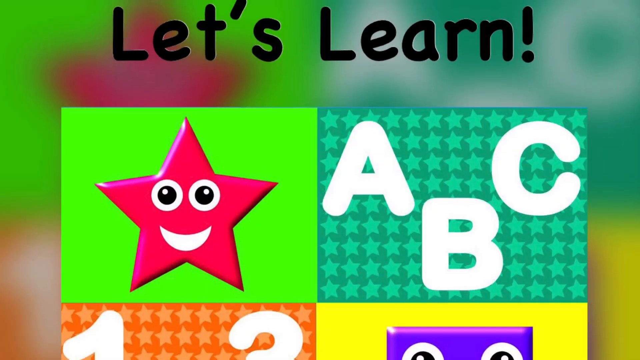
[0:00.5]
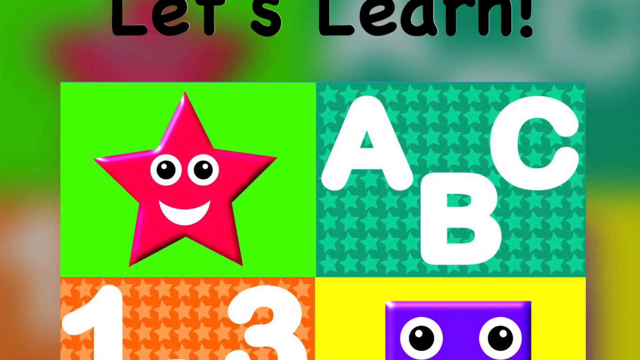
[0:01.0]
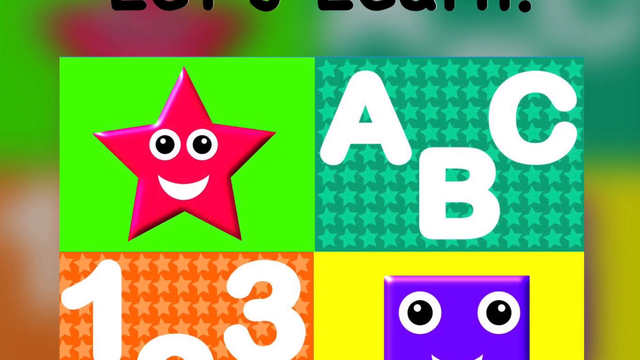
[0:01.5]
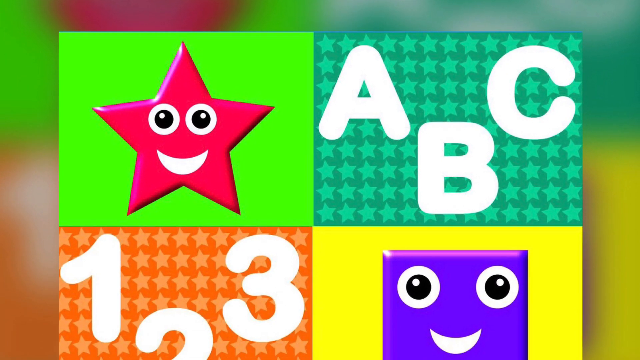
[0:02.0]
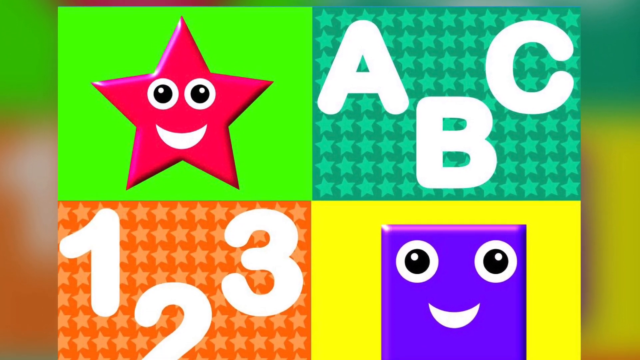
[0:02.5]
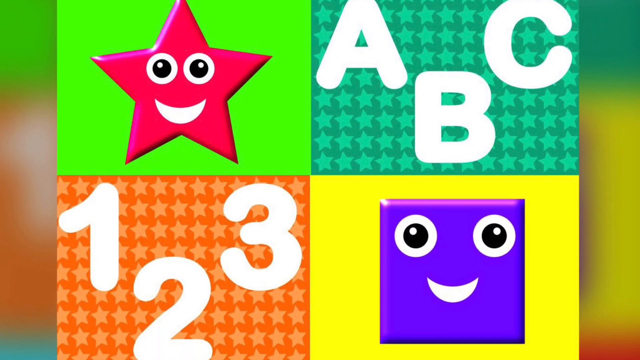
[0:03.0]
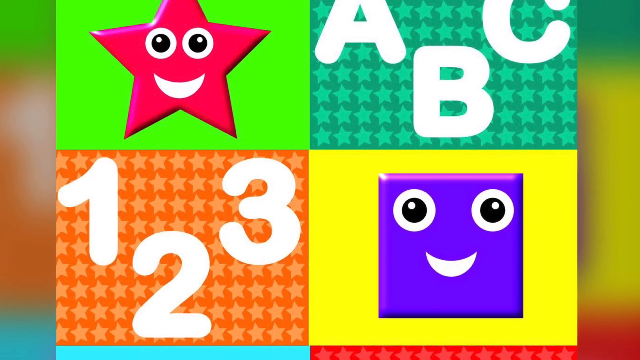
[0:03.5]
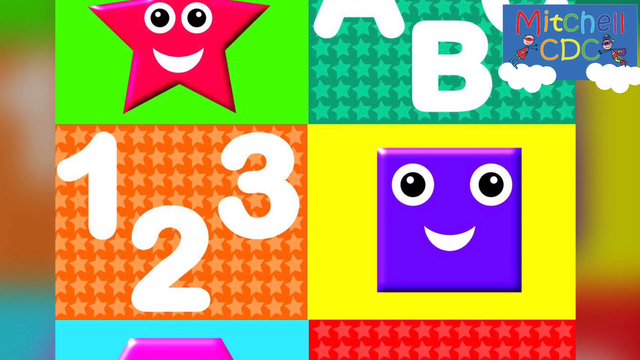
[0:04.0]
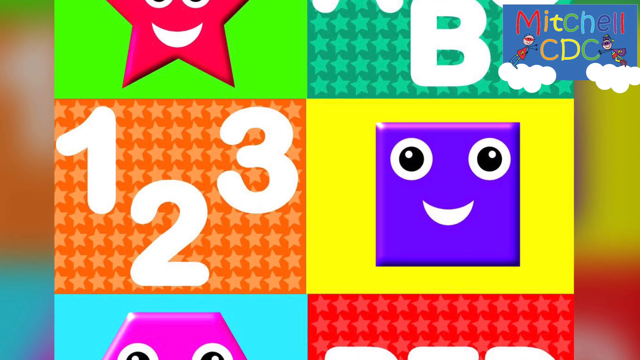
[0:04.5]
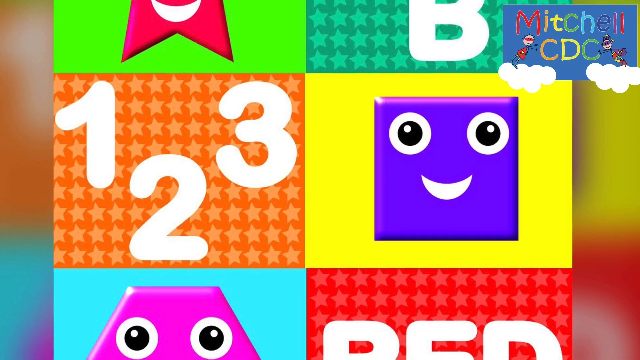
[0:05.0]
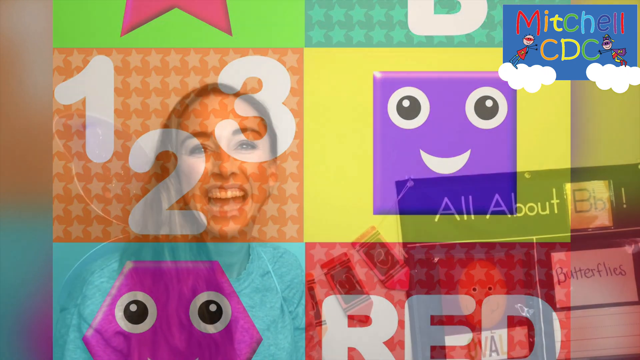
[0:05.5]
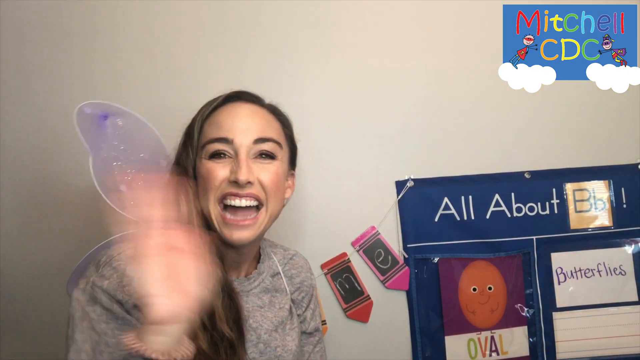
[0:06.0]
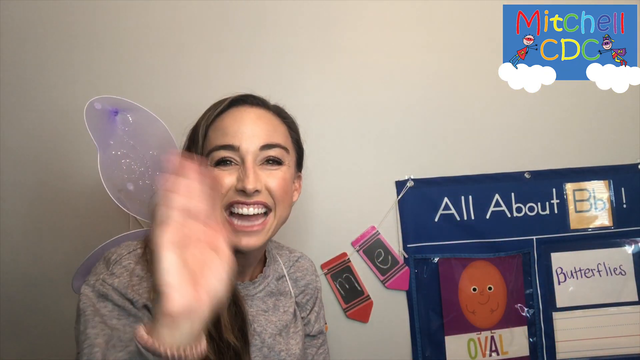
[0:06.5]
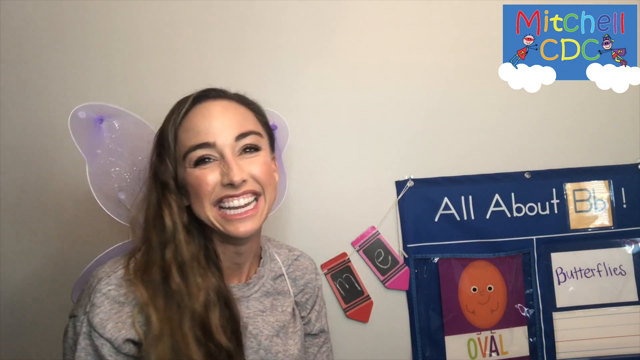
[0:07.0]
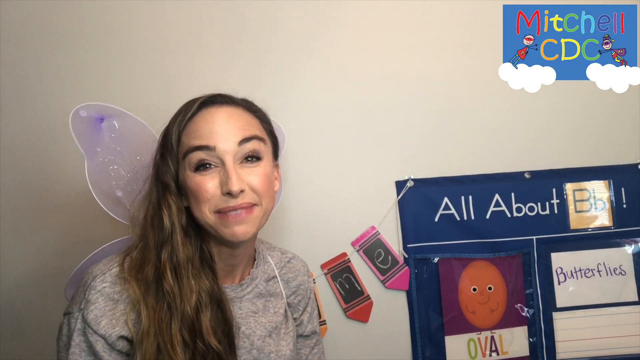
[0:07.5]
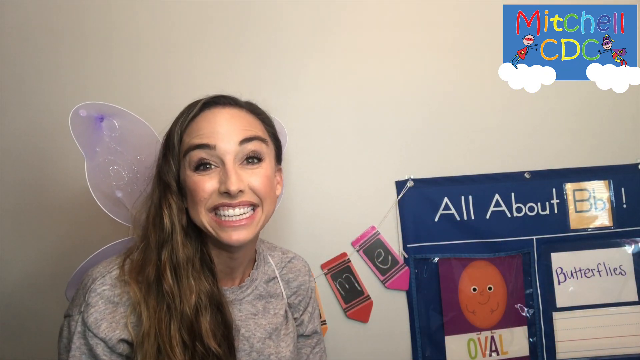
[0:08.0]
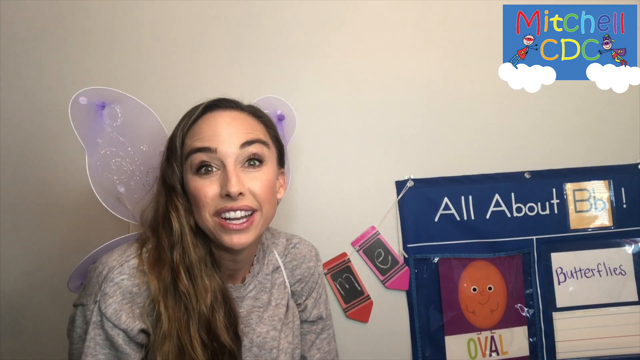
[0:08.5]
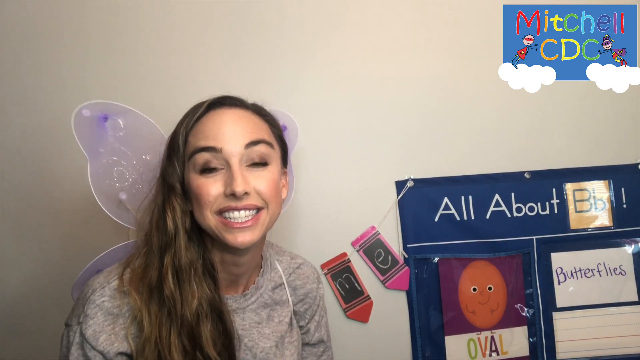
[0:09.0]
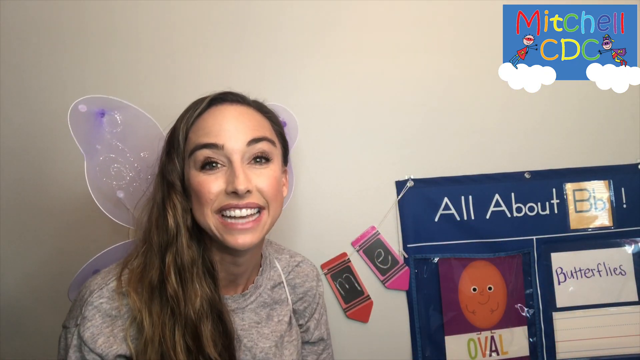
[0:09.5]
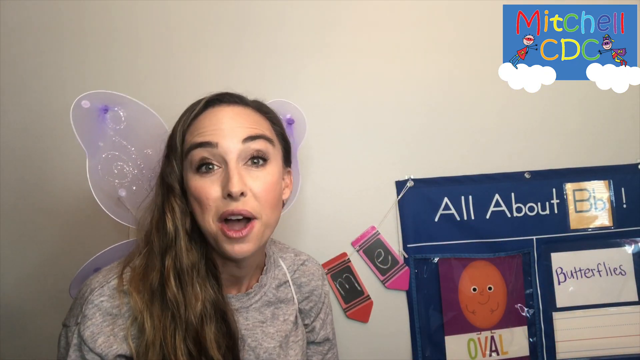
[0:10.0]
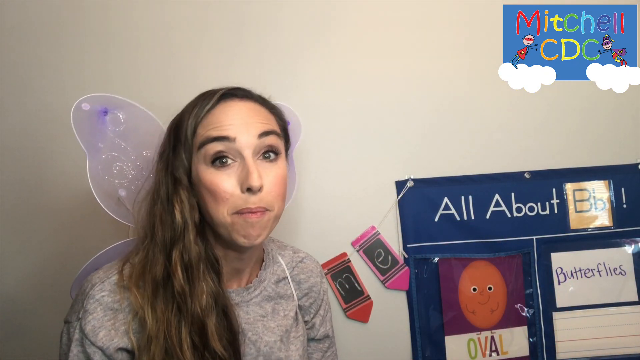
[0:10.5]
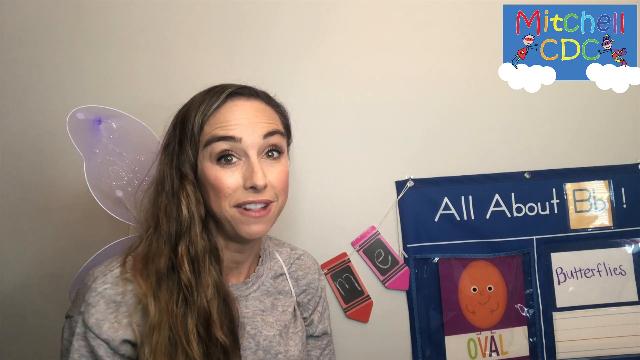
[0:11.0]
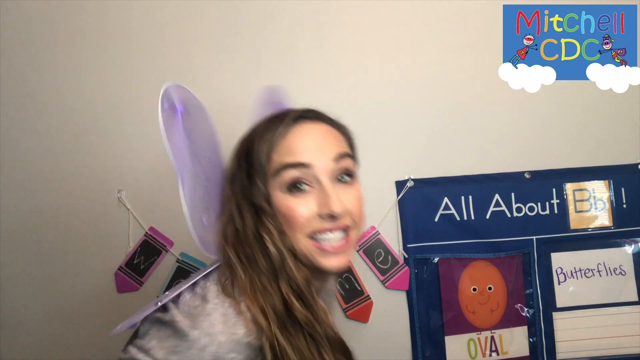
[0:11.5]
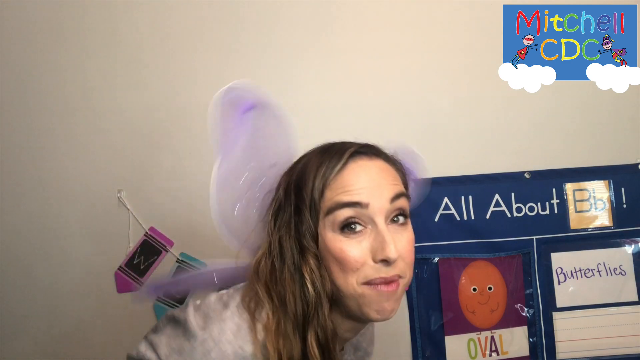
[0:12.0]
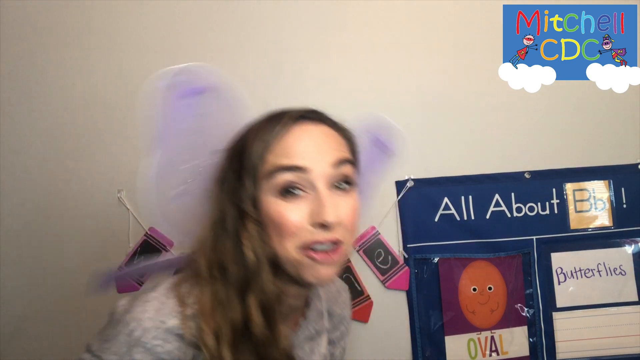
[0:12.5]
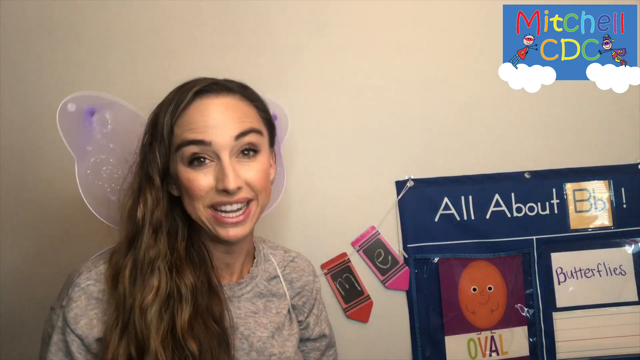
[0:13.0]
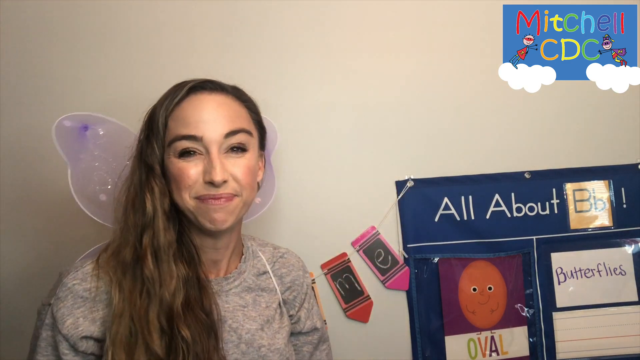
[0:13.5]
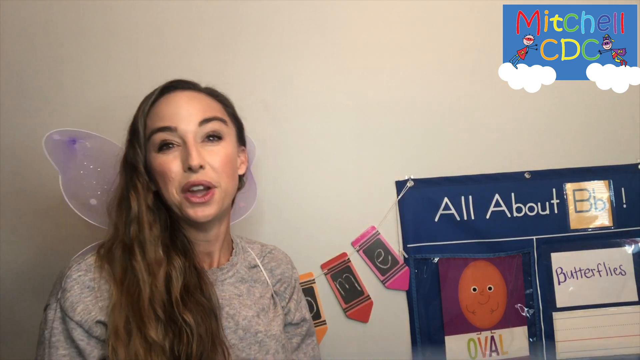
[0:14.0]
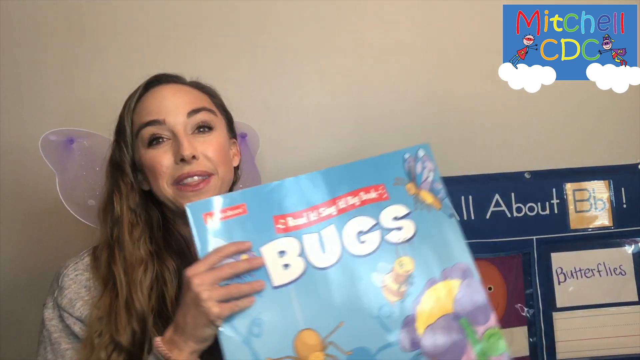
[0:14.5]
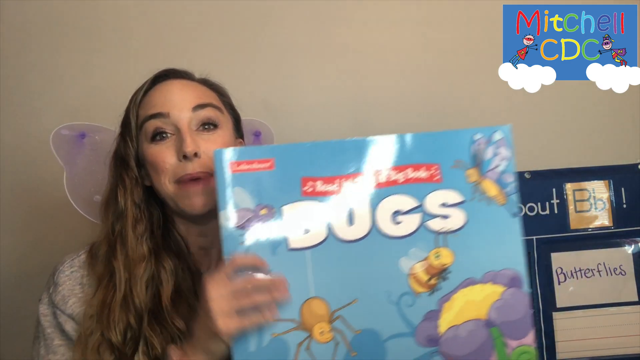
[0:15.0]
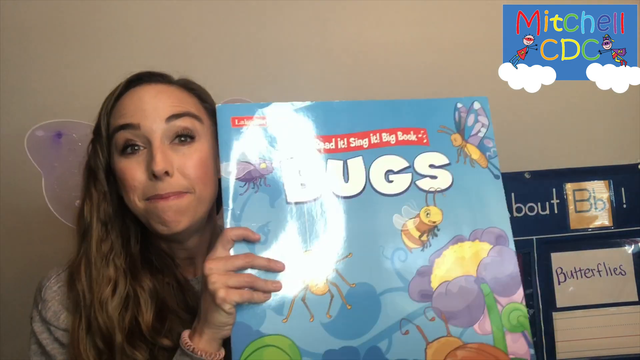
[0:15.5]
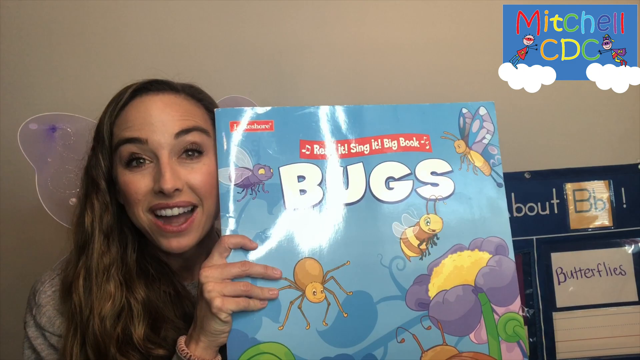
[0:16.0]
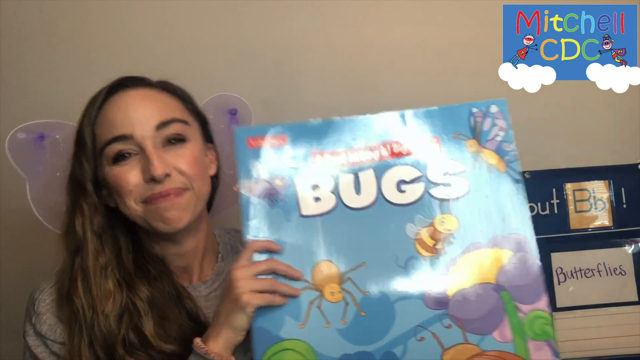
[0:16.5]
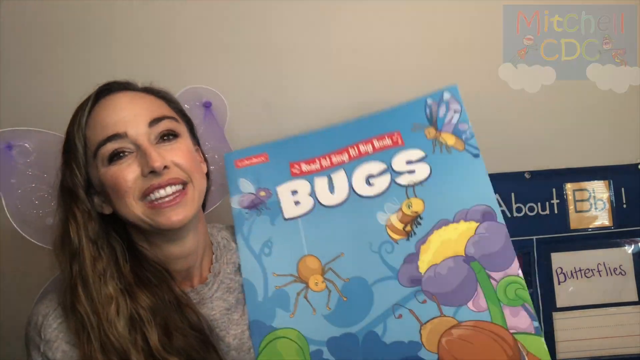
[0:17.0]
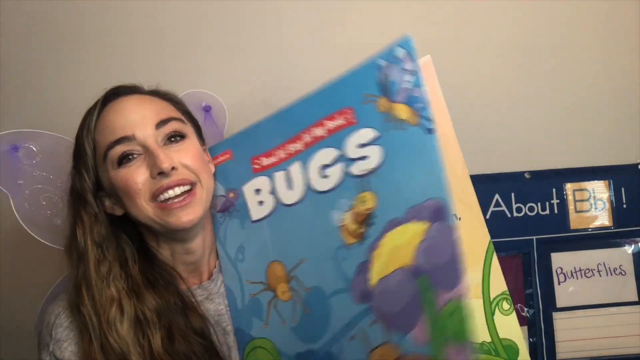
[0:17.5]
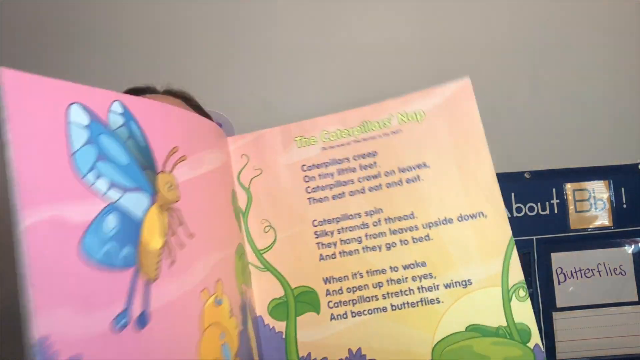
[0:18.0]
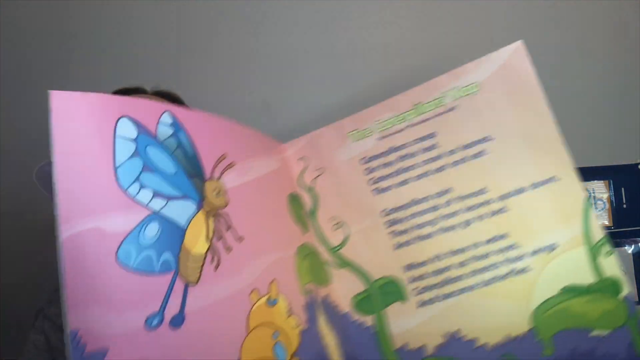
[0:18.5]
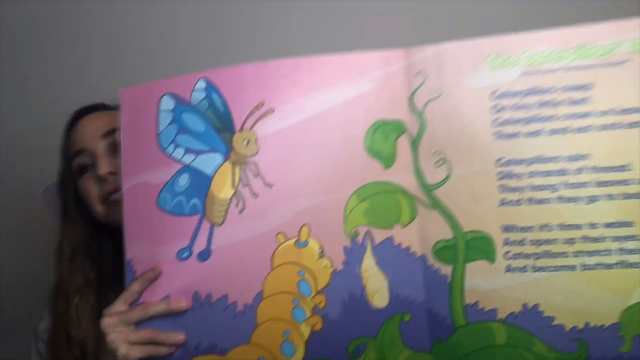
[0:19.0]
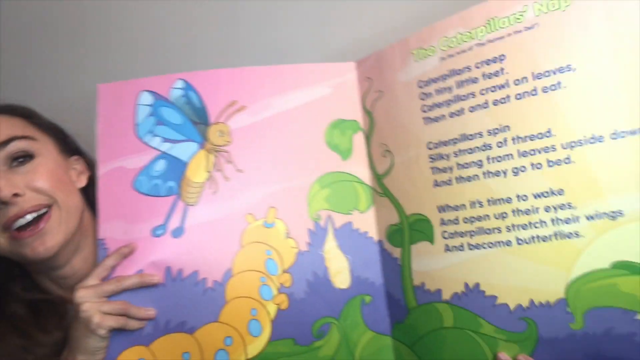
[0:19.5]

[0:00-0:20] Children's-style images appear: a pink star, the letter B, the numbers one, two, three, and smiling shapes, arranged in a number of squares with nicely, brightly colored backgrounds. In the corner, text reads "Mitchell CDC". The video then moves to a woman, perhaps in her mid-20s, in front of a wall with elementary-looking items, including a poster that says "butterflies". She has butterfly wings on her back, which she waves, and she speaks to the camera, likely introducing the episode. She then pulls open a very large book about bugs and seemingly starts reading. It appears to be a young teacher reading aloud to young kids and teaching them about bugs.